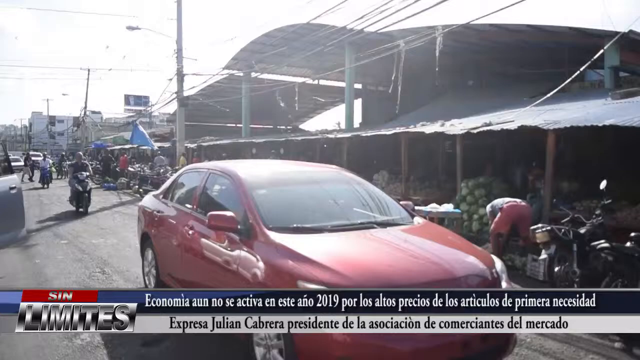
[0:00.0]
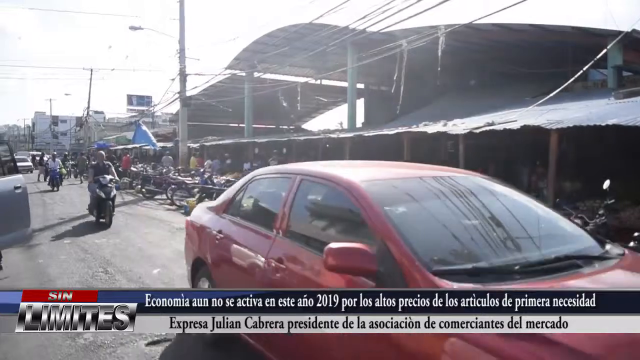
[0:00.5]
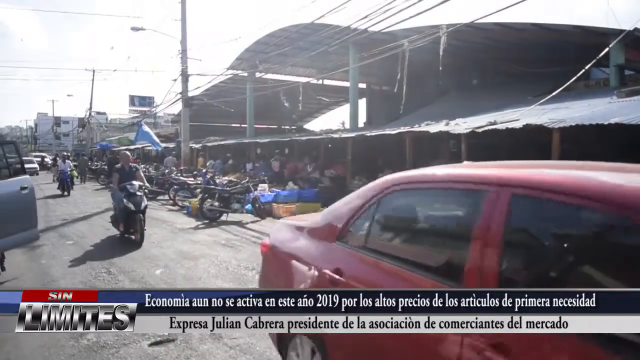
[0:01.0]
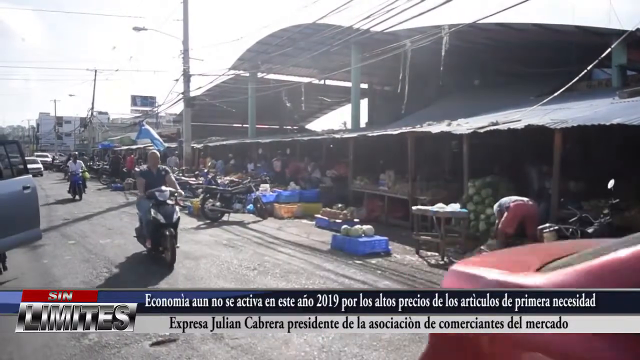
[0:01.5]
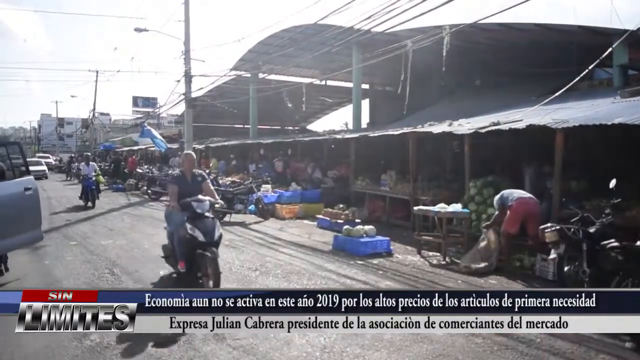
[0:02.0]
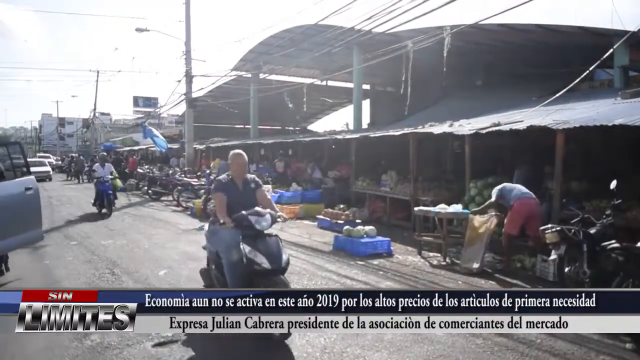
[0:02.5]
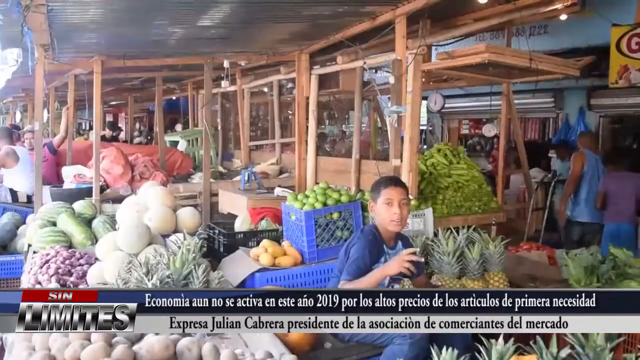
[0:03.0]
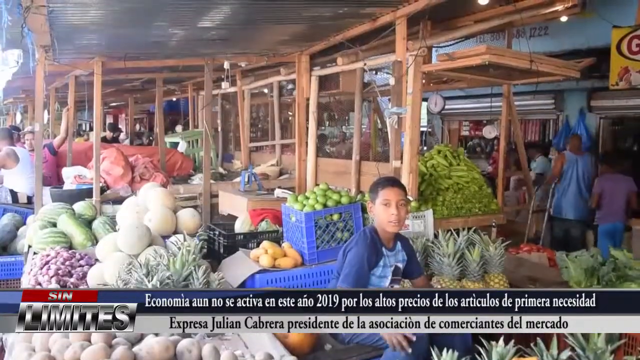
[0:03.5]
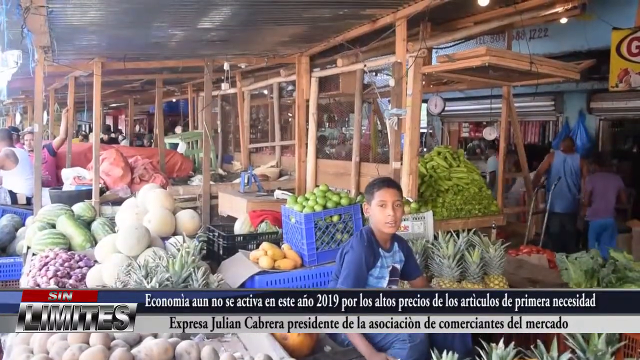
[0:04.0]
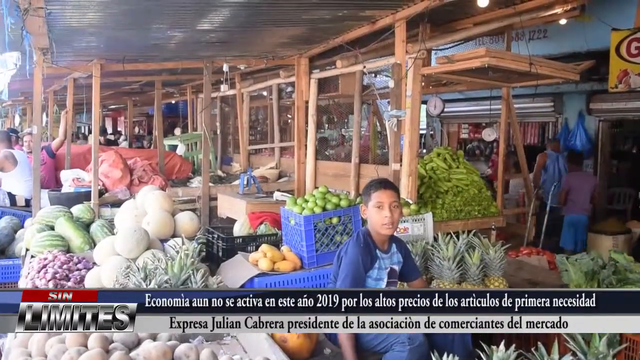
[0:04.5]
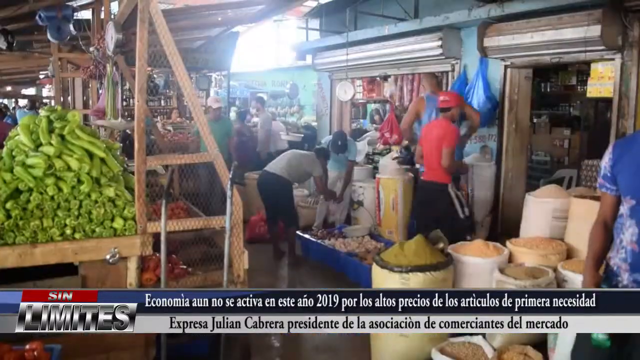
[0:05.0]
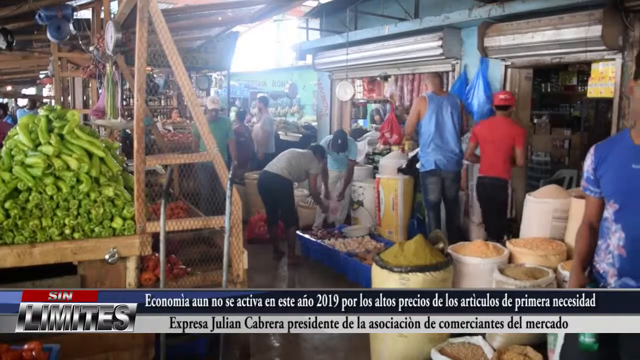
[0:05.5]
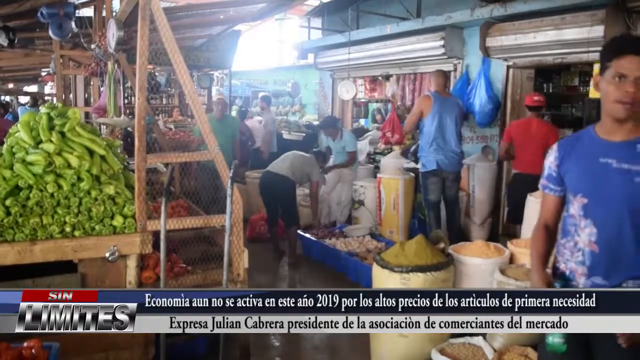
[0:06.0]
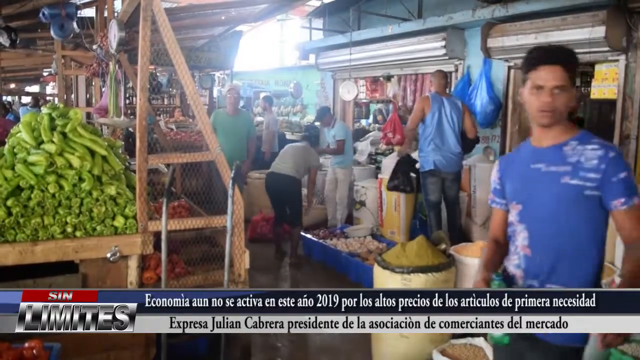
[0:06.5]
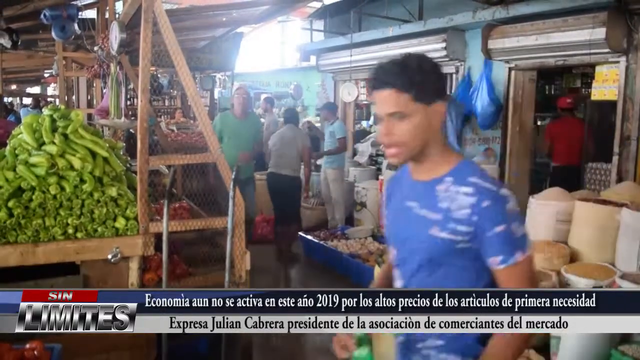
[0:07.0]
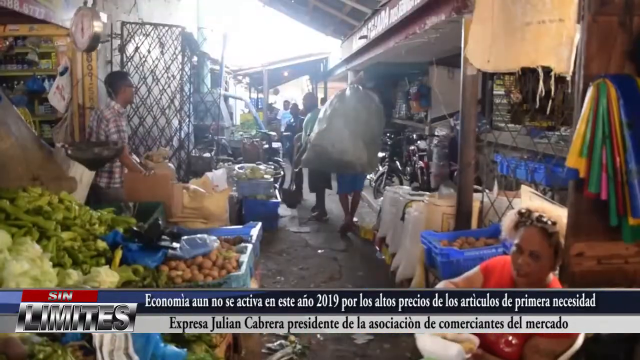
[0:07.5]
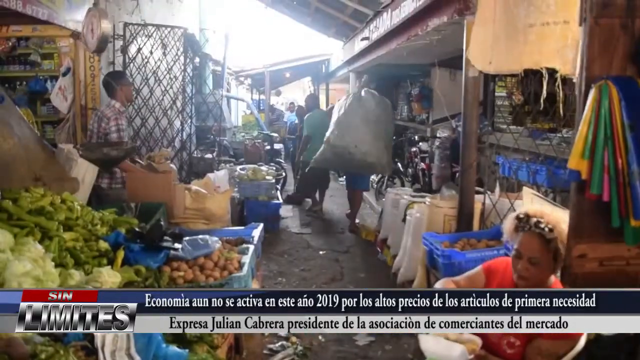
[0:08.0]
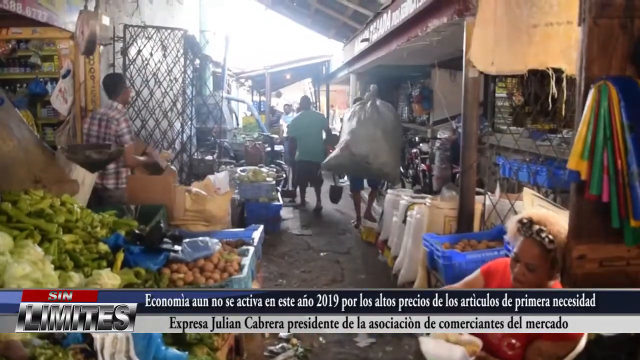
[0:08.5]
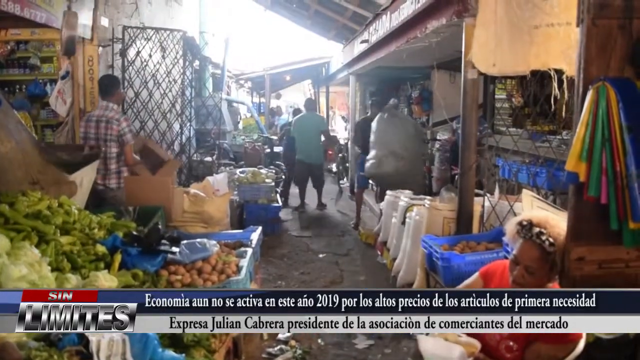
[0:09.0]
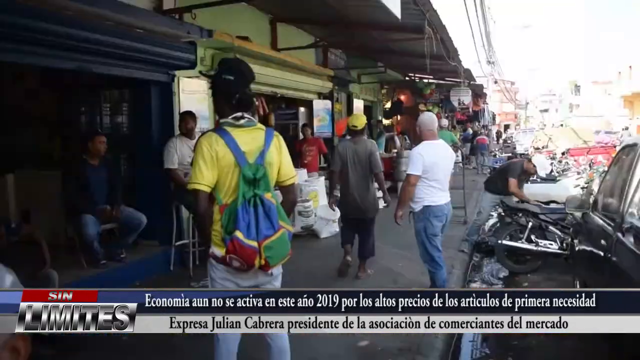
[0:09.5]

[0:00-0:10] A red car drives down a street, with different markets in the background and other people walking. Non-English words appear at the bottom of the screen, apparently referring to limits. The setting may be a country with street fairs or street markets where people walk up and down buying groceries and food. The sky is a fairly bright white, as on a very sunny day, with no clouds really visible. Telephone poles in the background have street lights coming out of them.